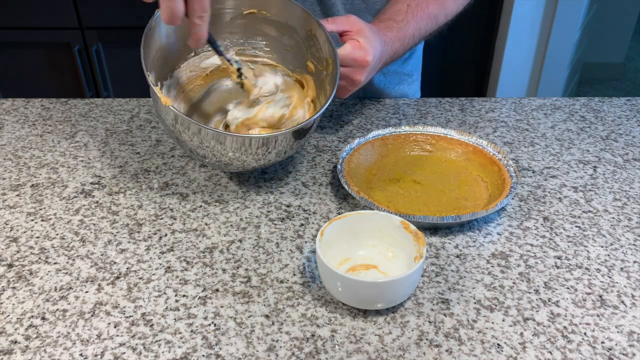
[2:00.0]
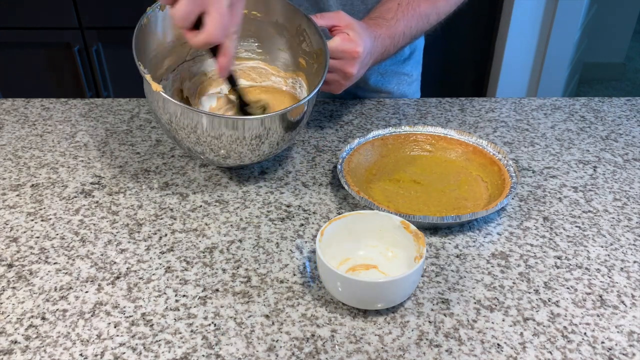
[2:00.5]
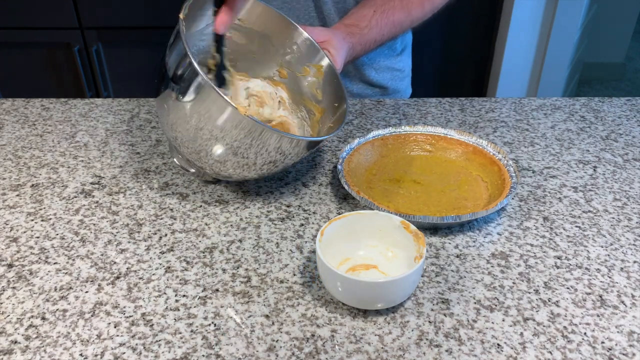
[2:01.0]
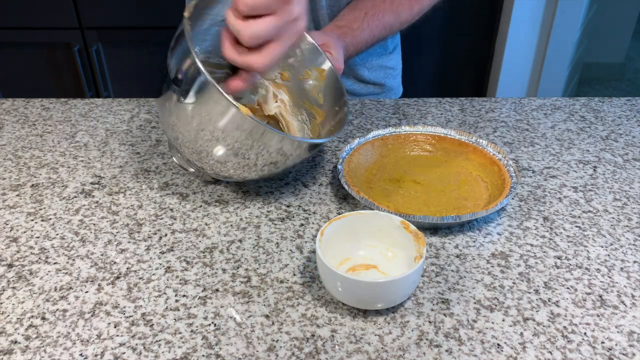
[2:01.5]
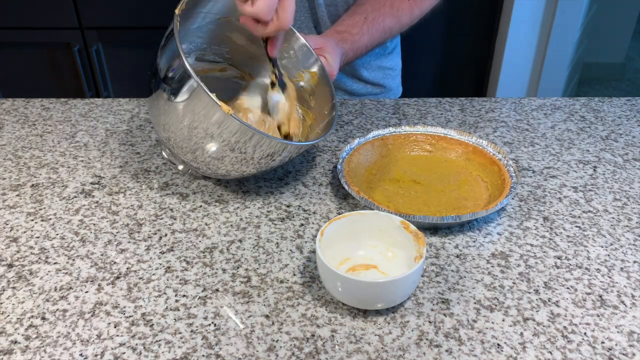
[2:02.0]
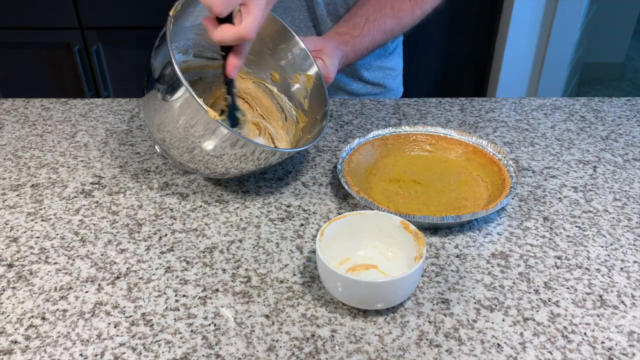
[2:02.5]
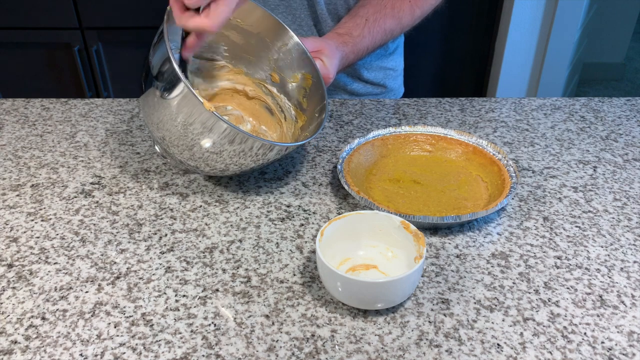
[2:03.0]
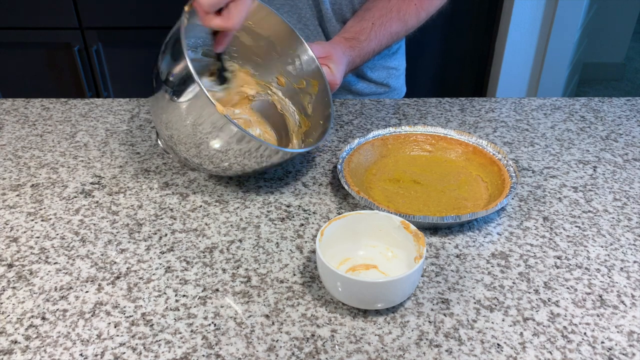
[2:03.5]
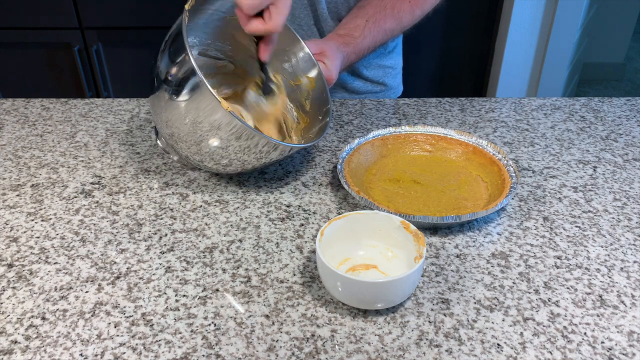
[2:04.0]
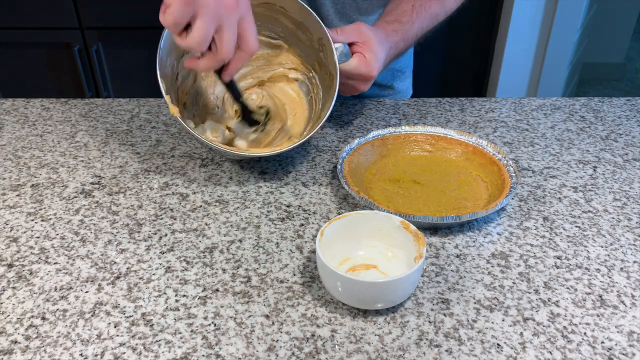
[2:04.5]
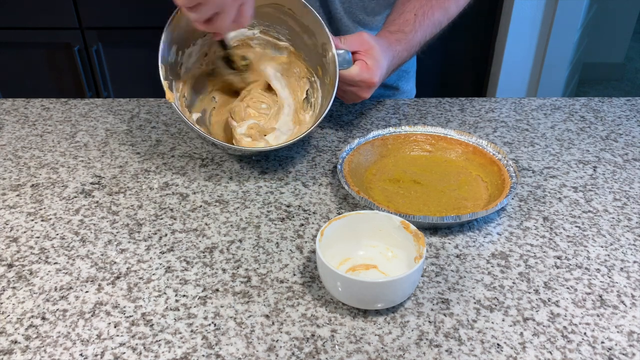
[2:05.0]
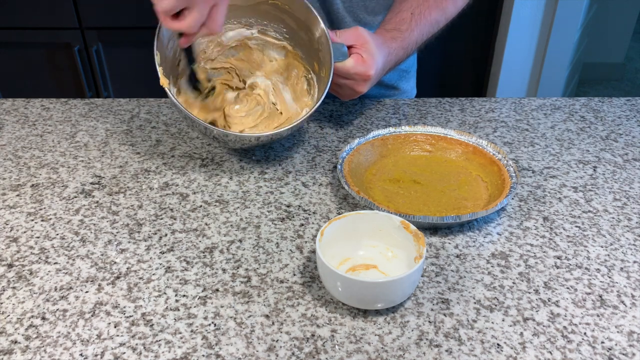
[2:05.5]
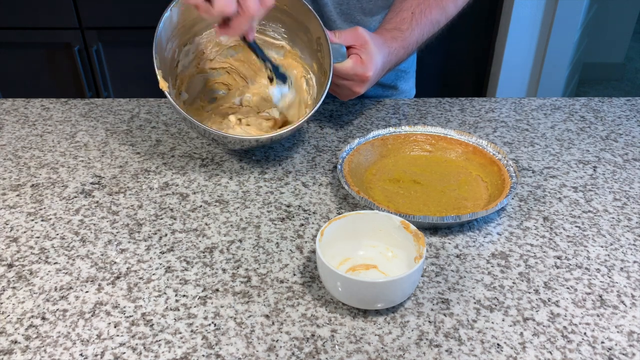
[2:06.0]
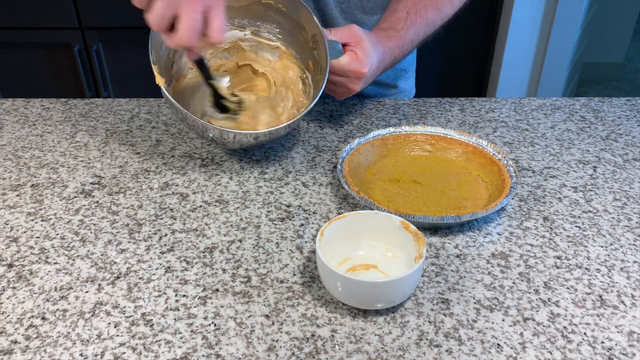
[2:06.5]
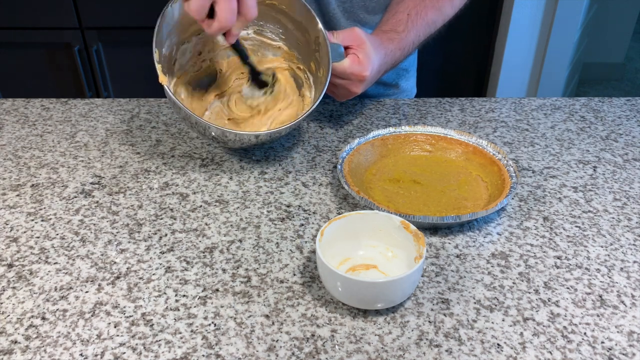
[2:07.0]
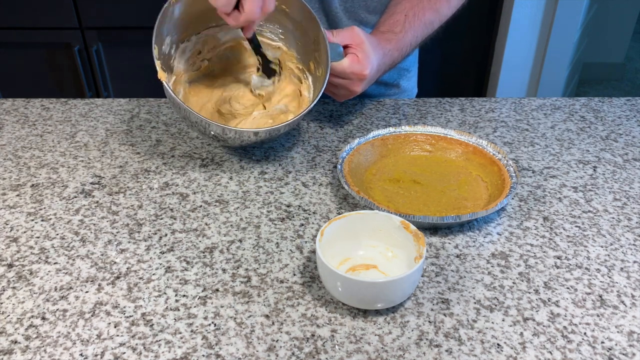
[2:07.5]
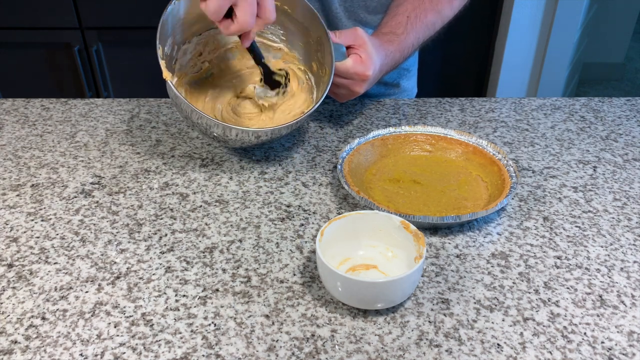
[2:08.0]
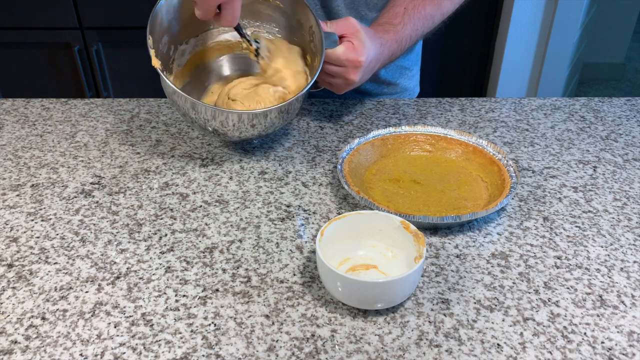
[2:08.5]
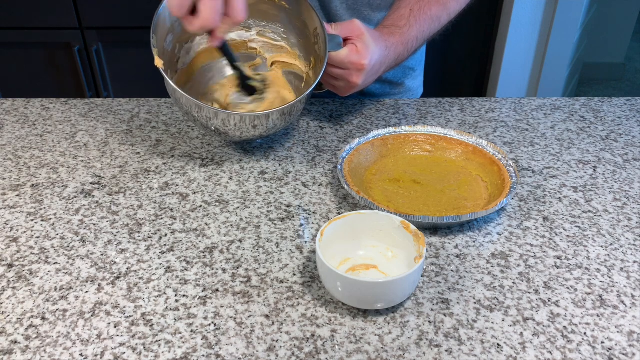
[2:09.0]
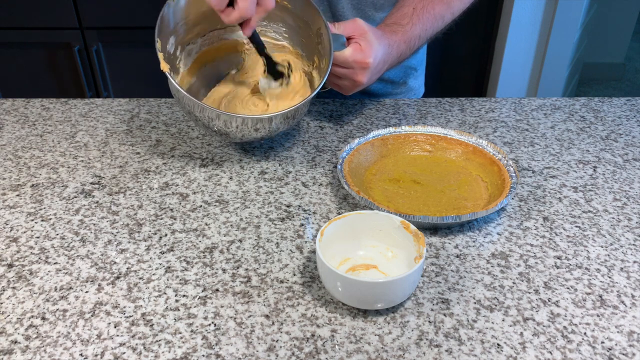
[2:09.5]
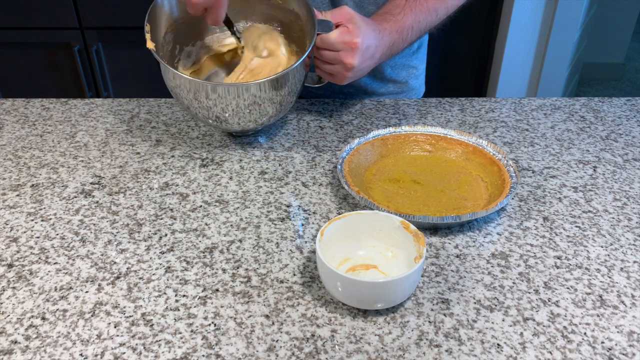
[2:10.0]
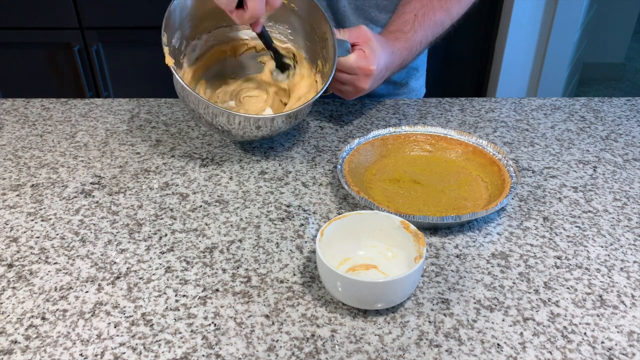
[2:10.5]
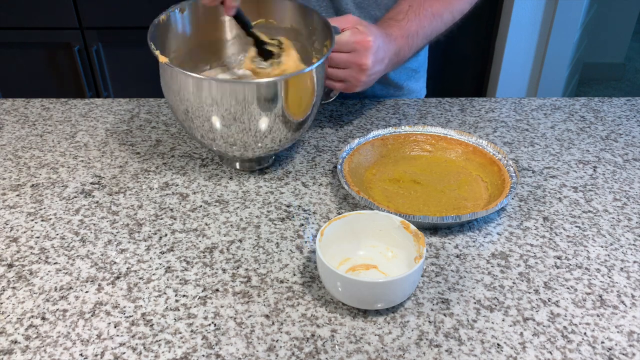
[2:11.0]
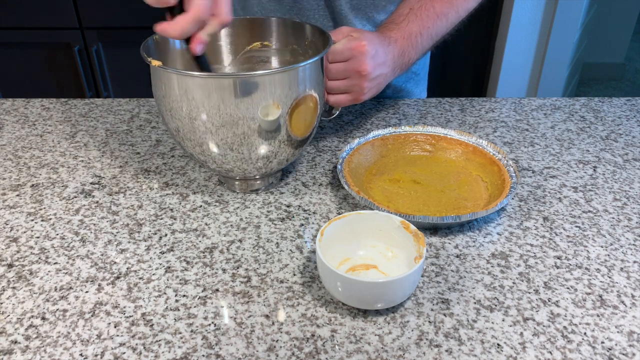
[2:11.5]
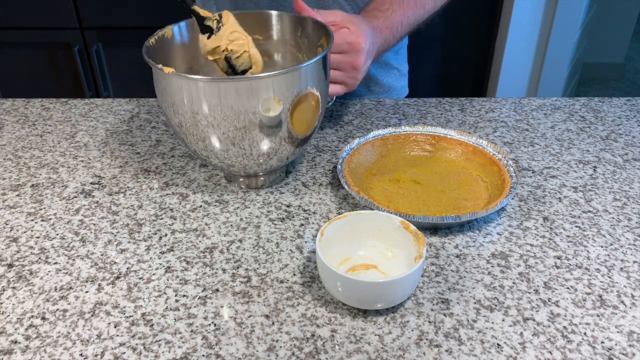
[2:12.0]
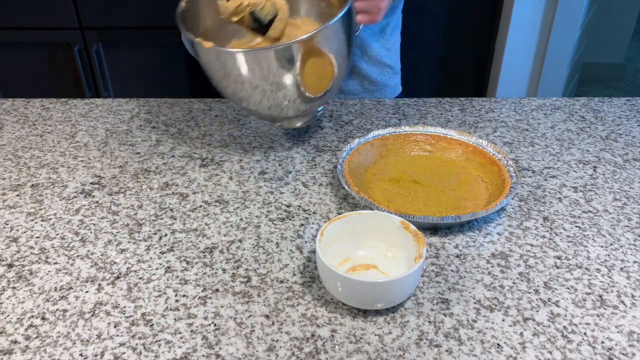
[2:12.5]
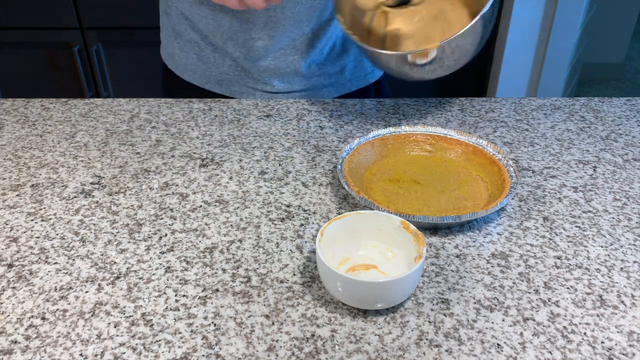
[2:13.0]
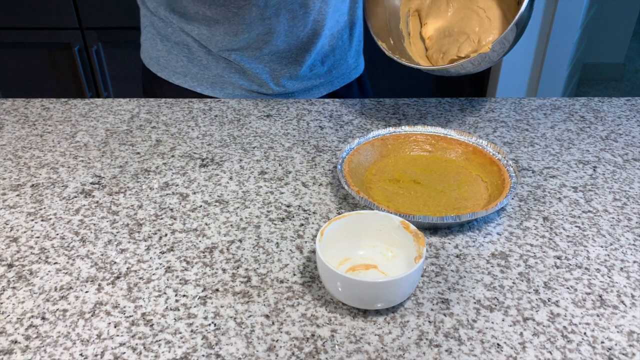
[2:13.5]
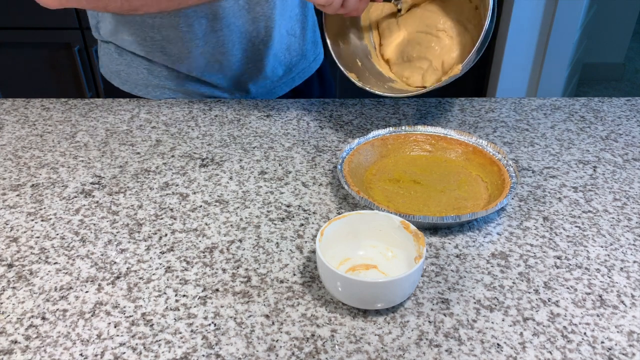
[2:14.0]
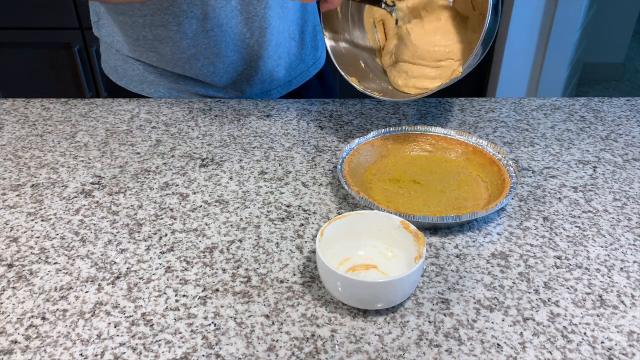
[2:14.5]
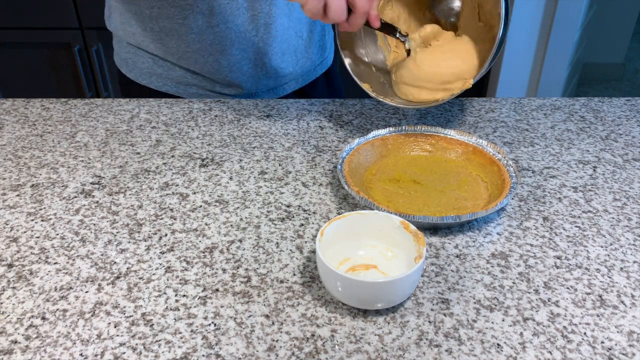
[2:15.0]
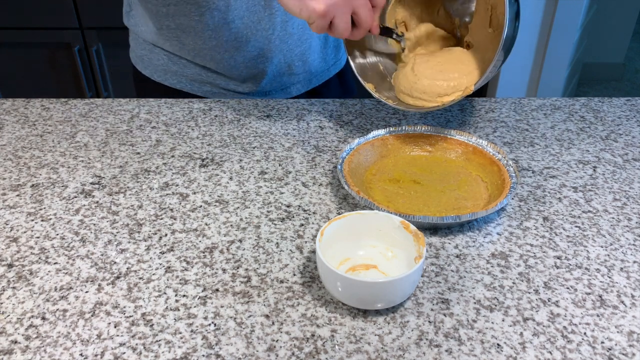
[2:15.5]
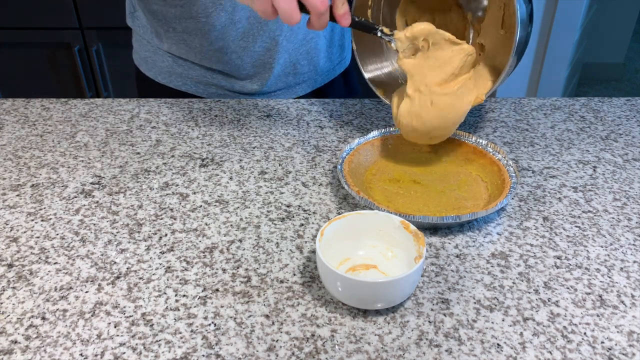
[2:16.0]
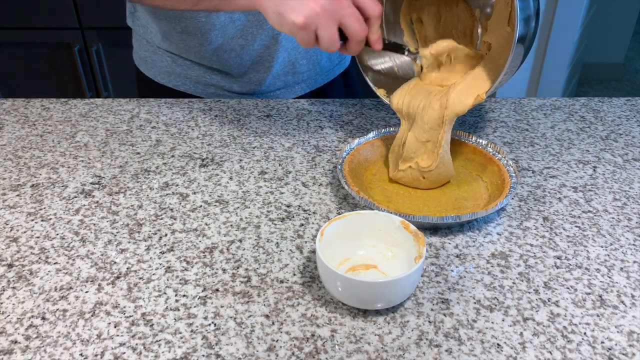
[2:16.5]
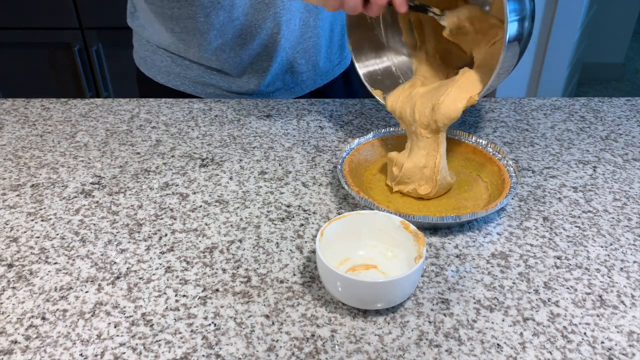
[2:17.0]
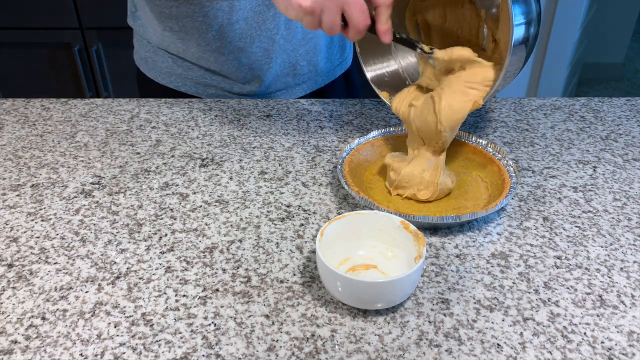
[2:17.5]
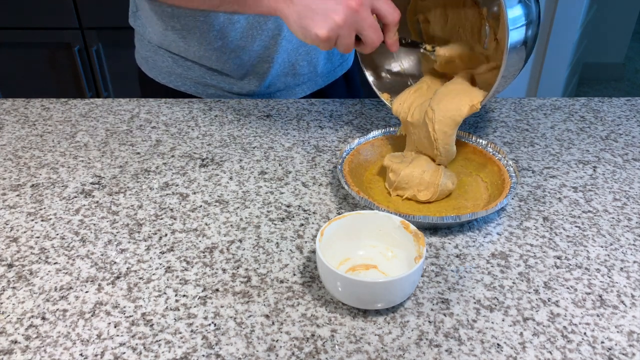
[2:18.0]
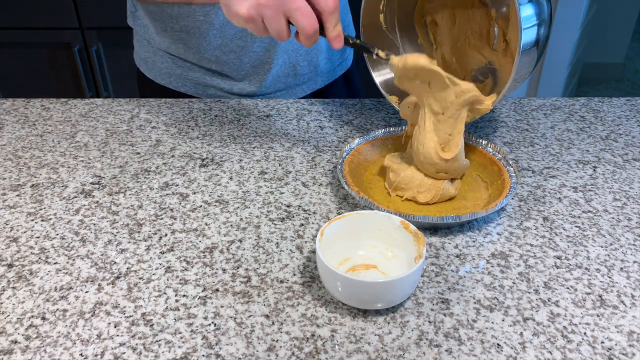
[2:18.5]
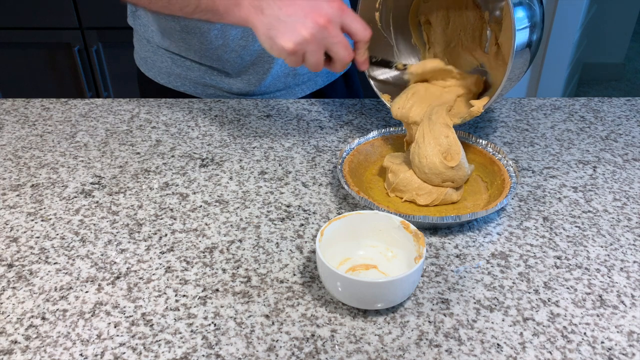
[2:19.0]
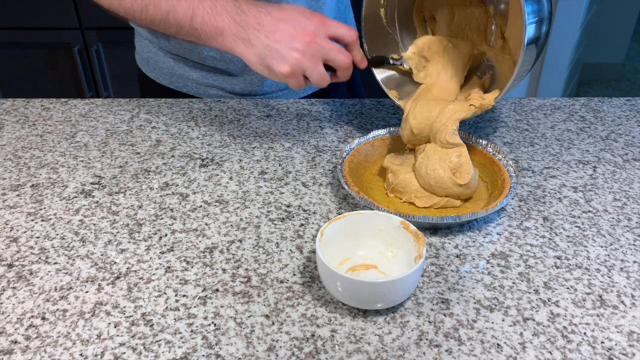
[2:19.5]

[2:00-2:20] In the kitchen, the man shows the inside of the big silver bowl where he has mixed everything, continuing to mix with the black spatula. As he mixes, he tilts the bowl so the inside can be seen. On the countertop are a white bowl and a silver plate; the silver plate is where the yolk was painted on and is still yellowish. He then pours all of the mixture onto the silver plate where the yolk was applied to its walls.